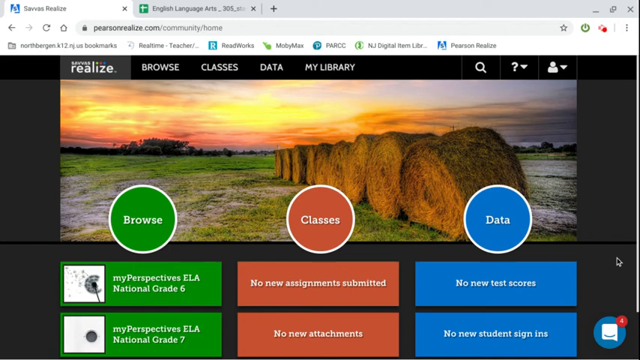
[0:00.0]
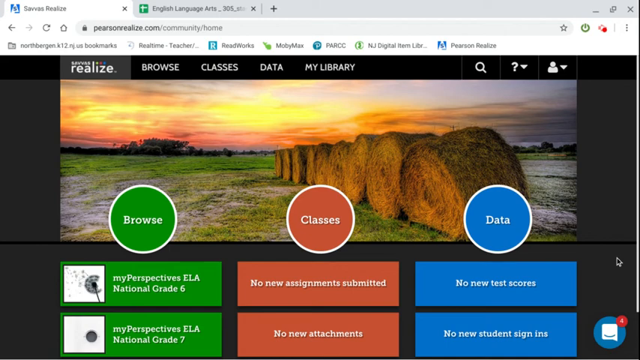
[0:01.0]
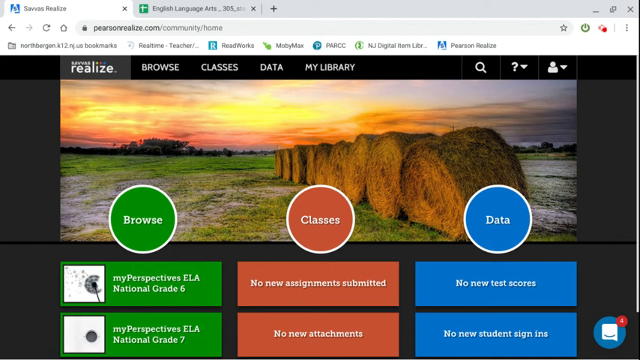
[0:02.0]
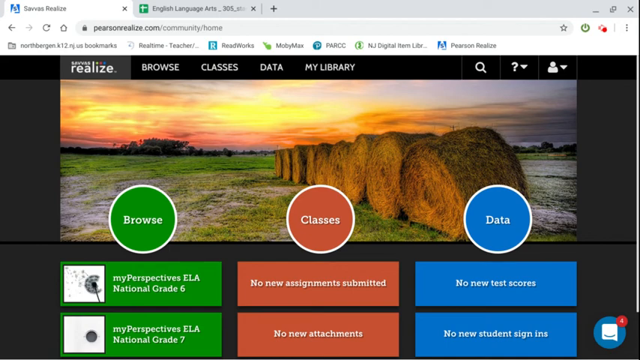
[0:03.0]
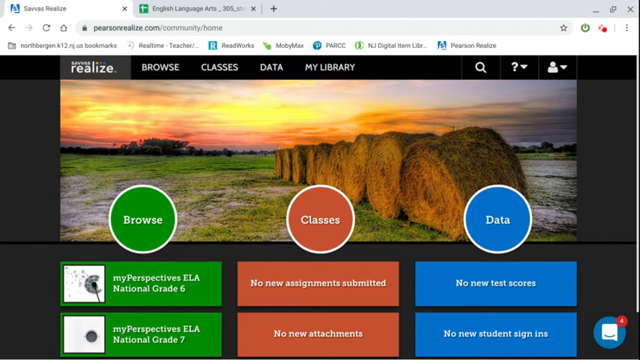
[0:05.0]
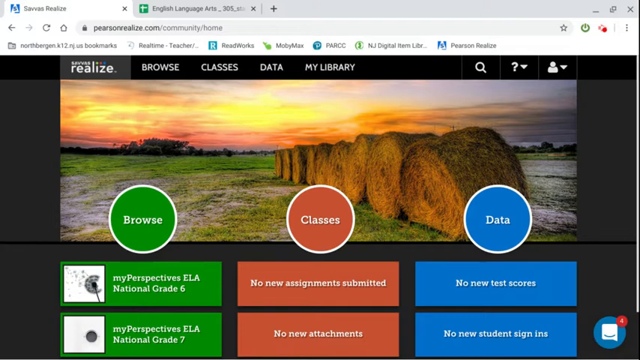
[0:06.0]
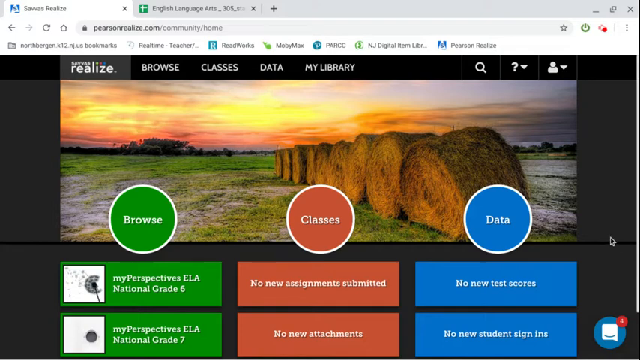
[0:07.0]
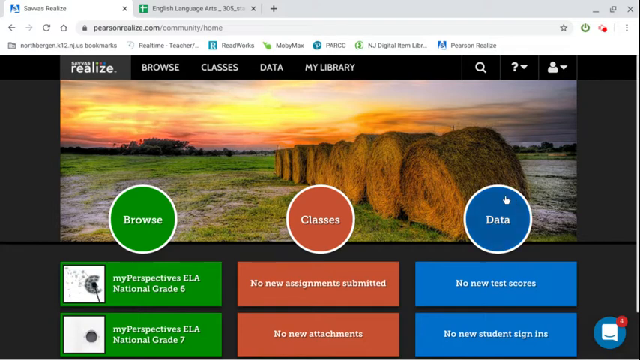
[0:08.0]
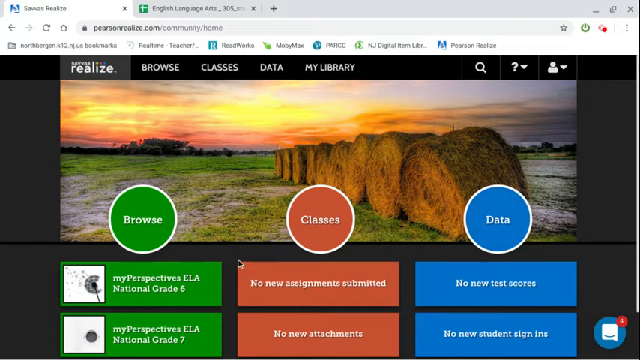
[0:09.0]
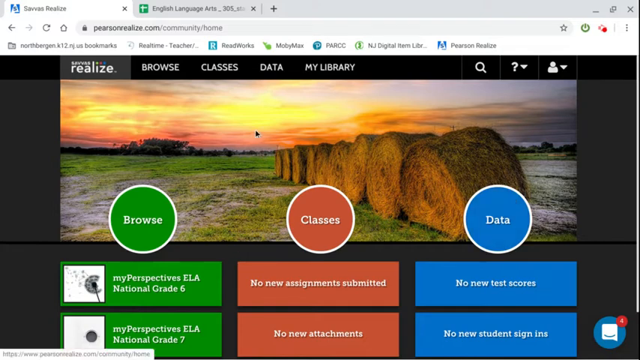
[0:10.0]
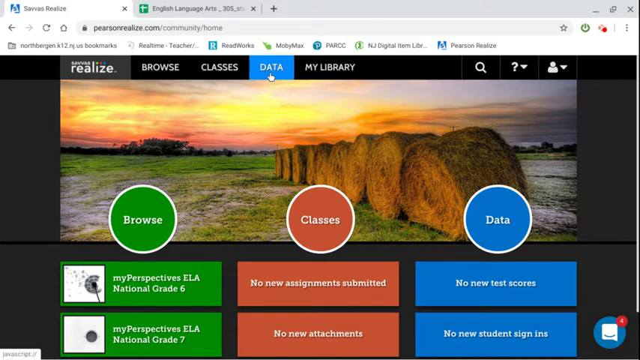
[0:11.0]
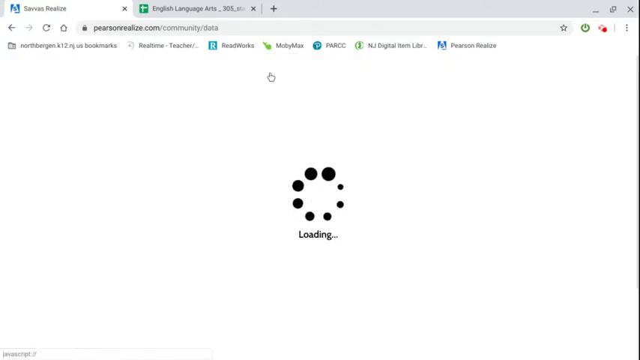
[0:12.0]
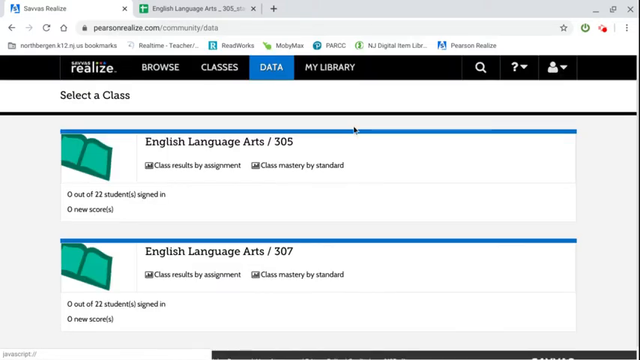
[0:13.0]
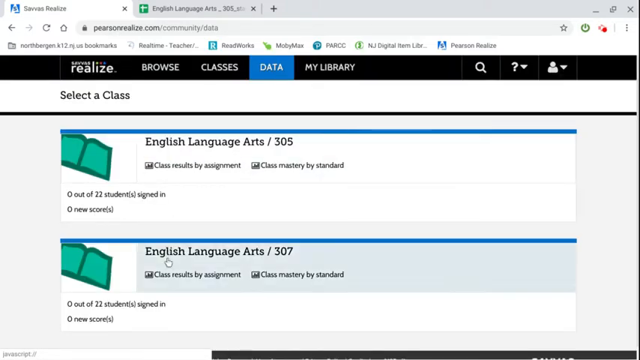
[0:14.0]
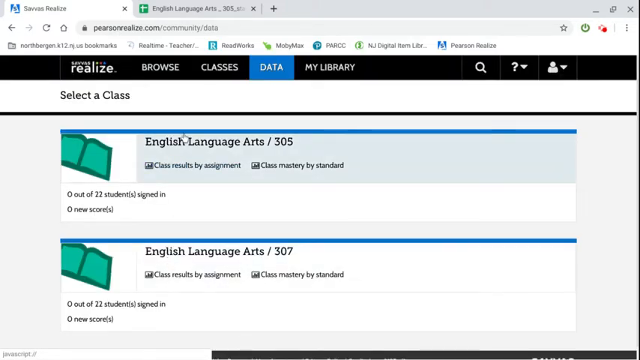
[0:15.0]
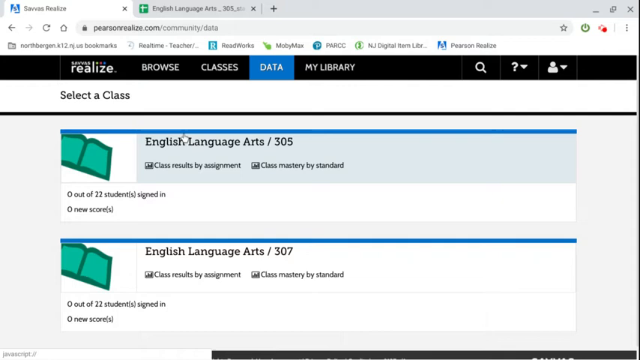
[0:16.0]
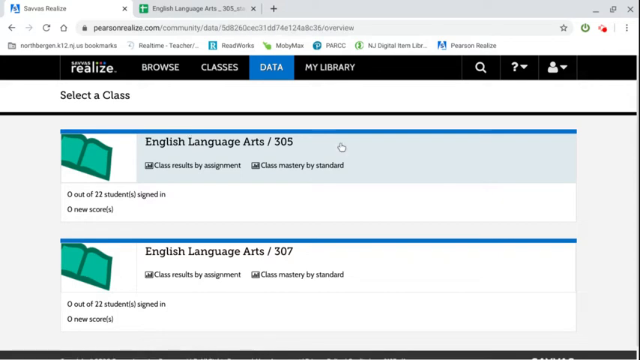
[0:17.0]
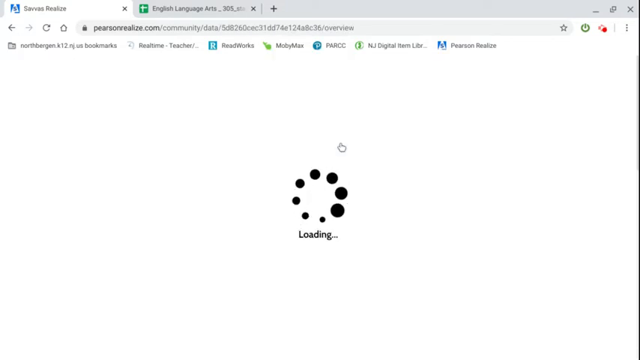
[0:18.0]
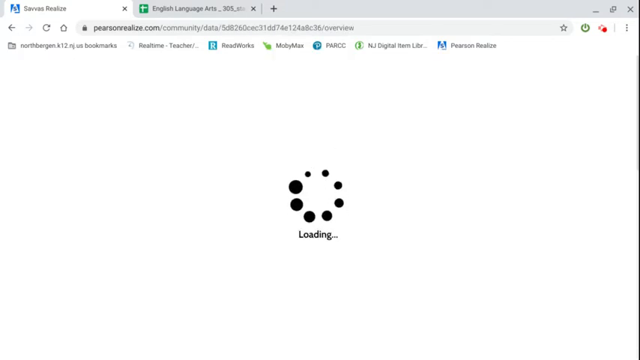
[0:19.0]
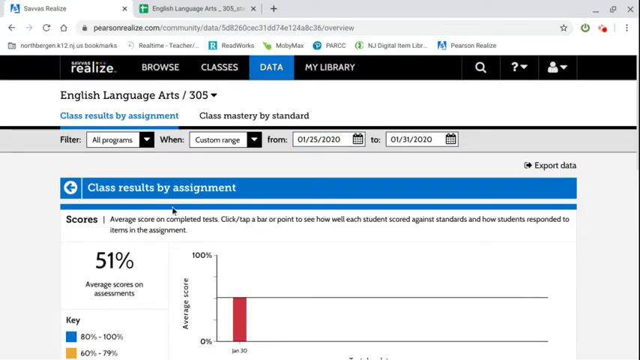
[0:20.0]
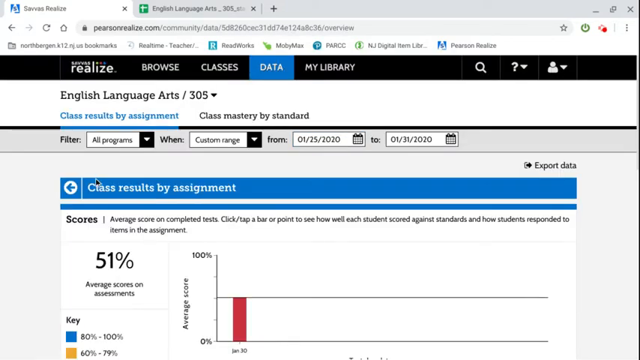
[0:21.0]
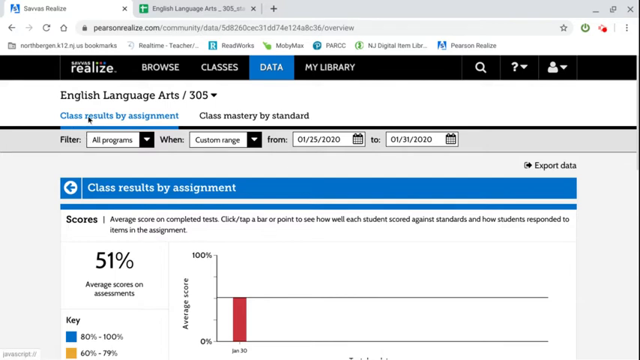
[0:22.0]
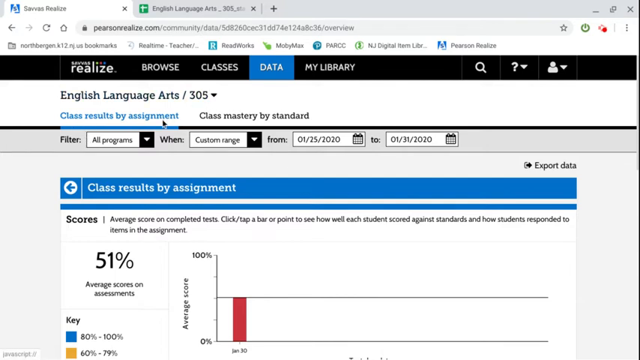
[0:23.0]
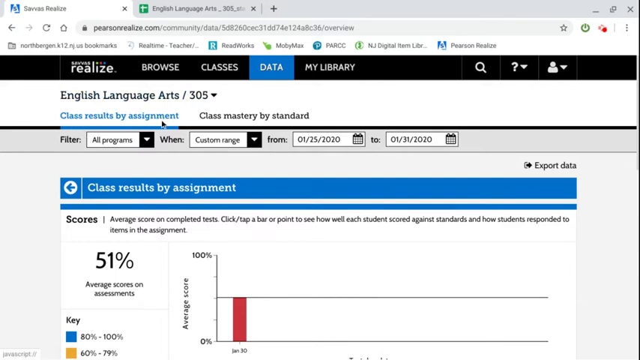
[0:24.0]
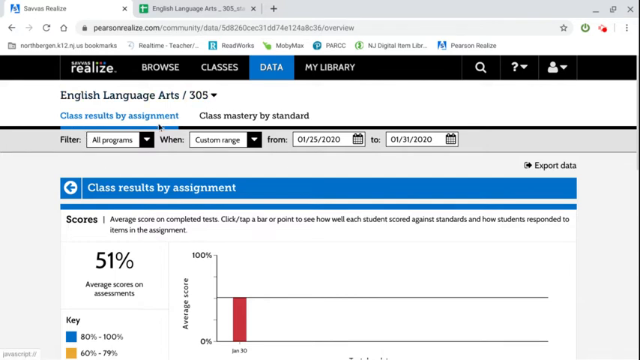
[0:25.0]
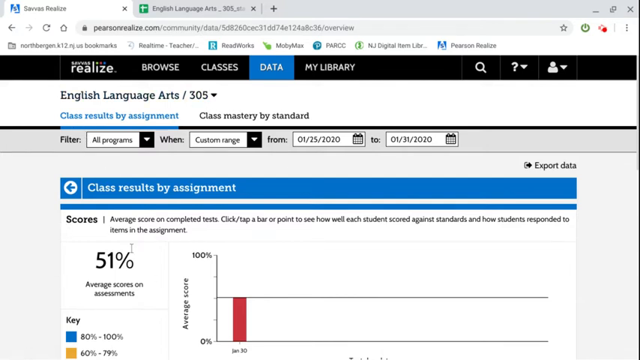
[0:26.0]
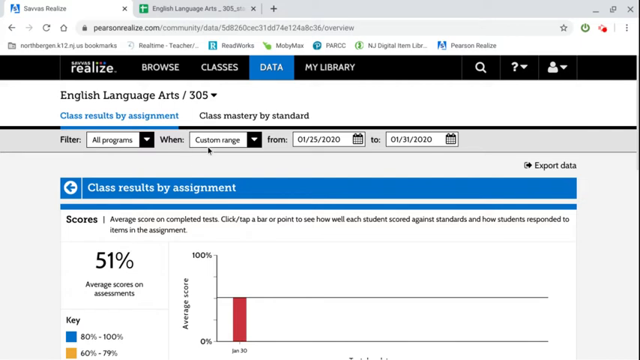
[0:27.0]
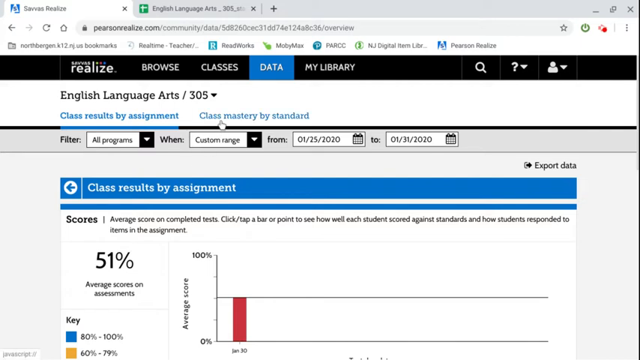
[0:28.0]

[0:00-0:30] The video appears to show the Pearson Realize website, which appears to have classes, data and other content. It opens on a display of the site in a web browser, with a background picture of a field with some haystacks. A menu at the top shows "Pearson Realize" and the menu items "Browse", "Classes", "Data" and "My Library". Below the picture are "Browse" in green, "Classes" in red and "Data" in blue, each with some menu items underneath. The mouse, up on the right-hand side, goes to "Data" at the top and selects it. A class is selected, apparently "English Language Arts 305", and the English Language Arts 305 page opens. "Class Results by Assignment" is then apparently opened.